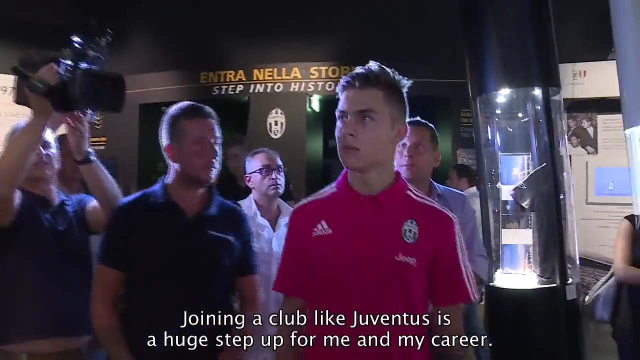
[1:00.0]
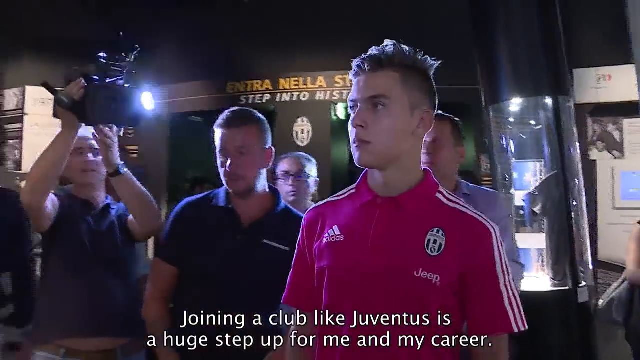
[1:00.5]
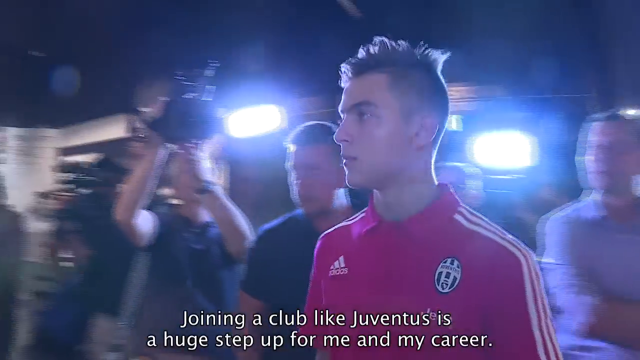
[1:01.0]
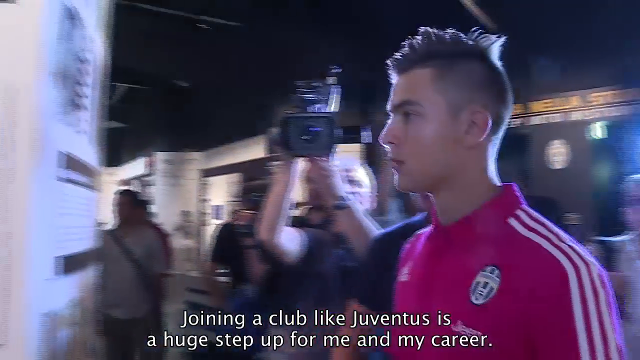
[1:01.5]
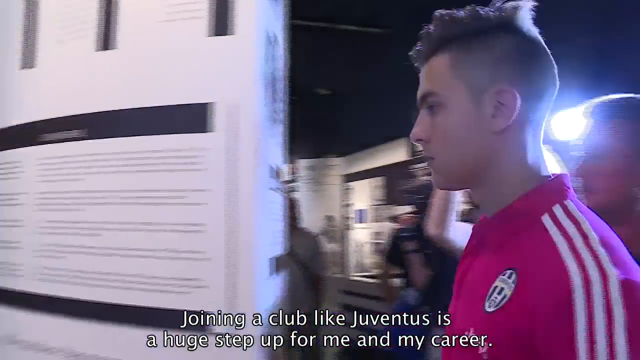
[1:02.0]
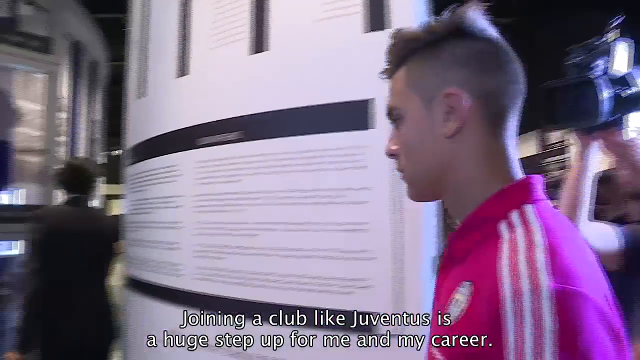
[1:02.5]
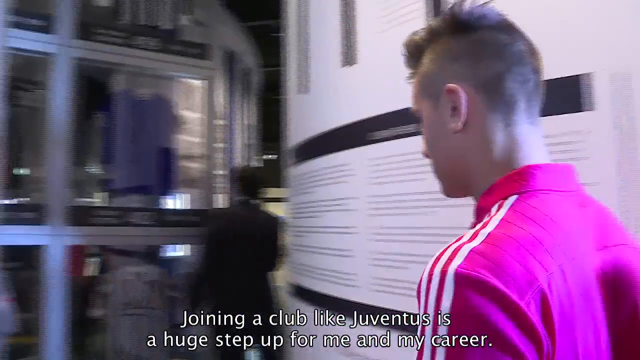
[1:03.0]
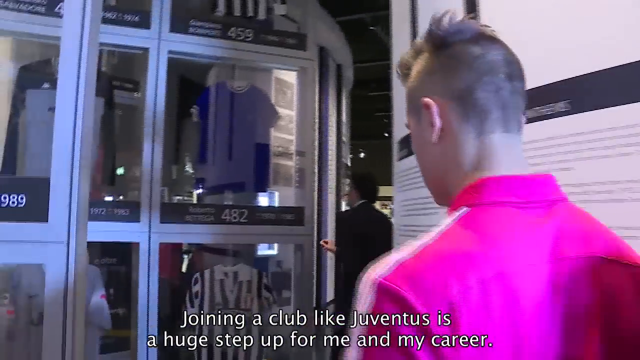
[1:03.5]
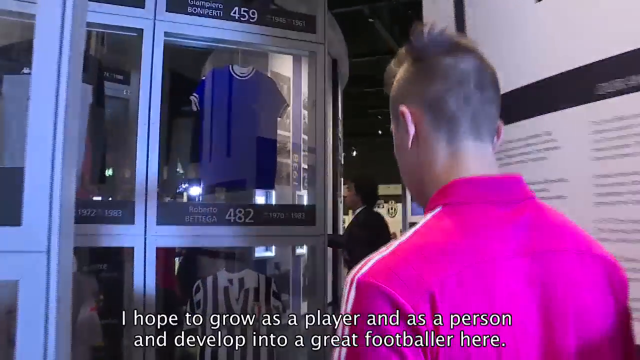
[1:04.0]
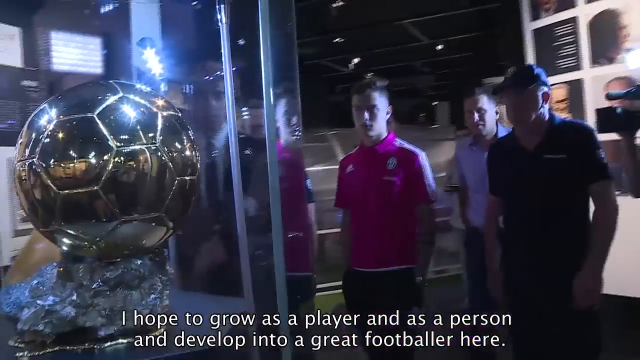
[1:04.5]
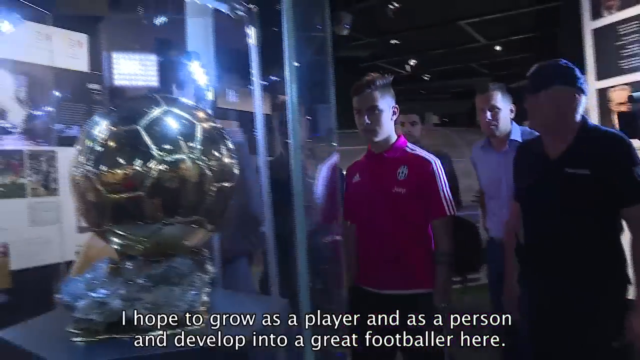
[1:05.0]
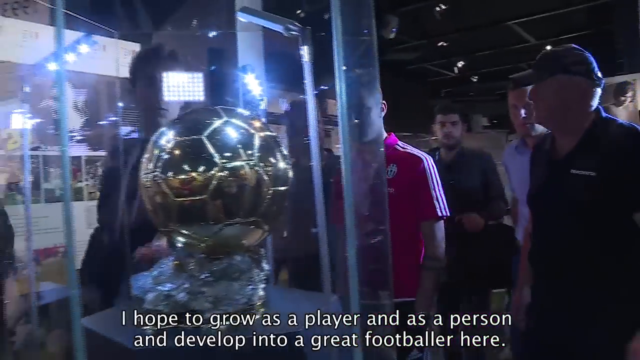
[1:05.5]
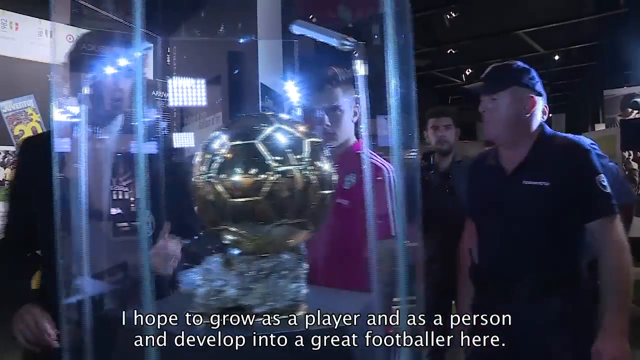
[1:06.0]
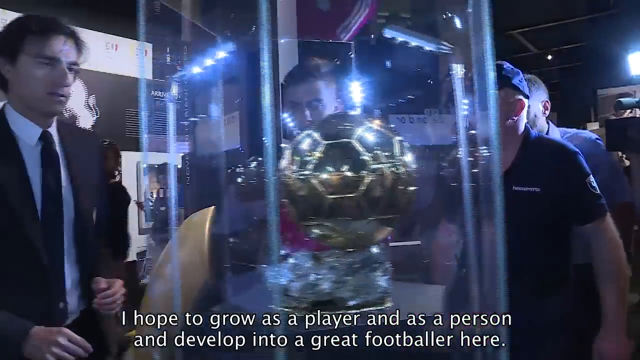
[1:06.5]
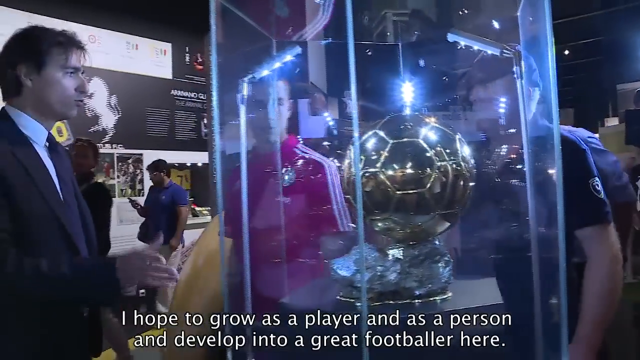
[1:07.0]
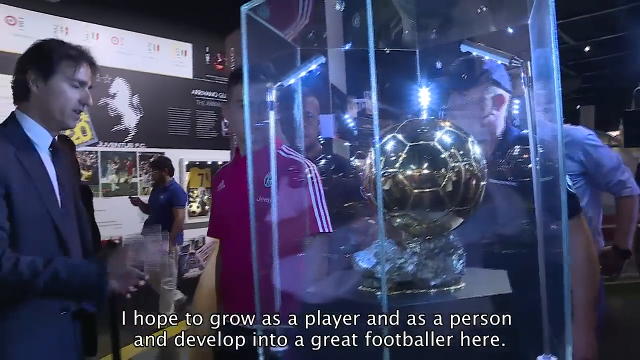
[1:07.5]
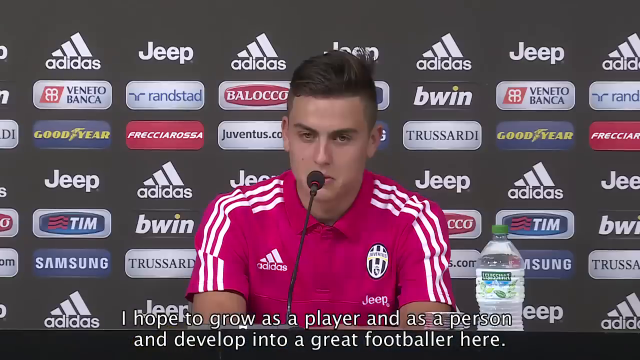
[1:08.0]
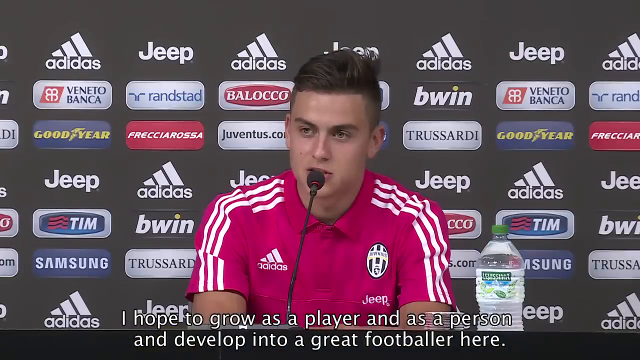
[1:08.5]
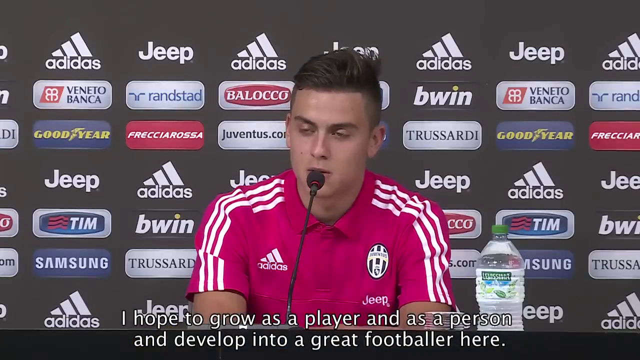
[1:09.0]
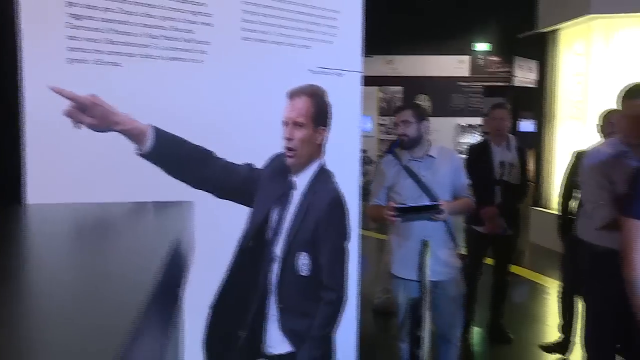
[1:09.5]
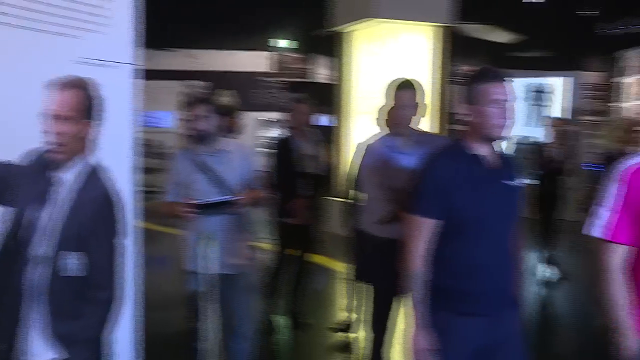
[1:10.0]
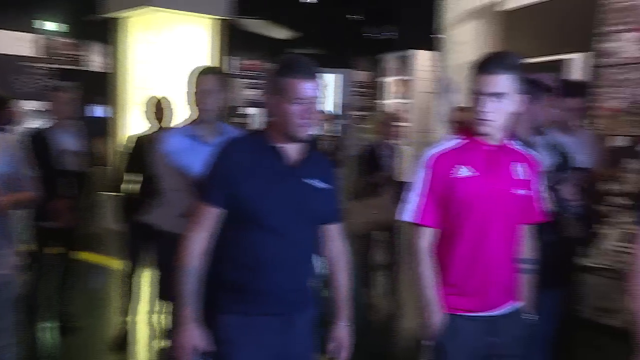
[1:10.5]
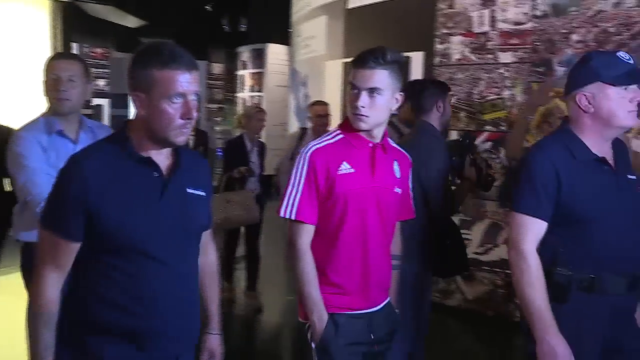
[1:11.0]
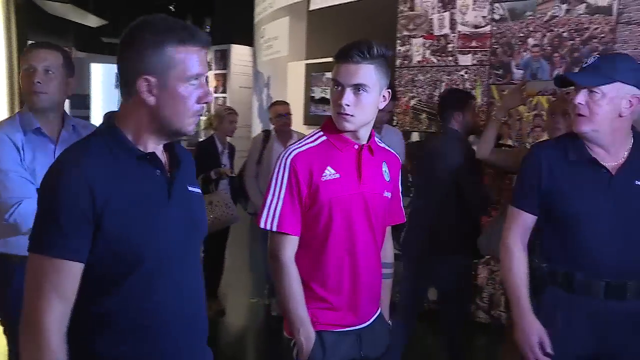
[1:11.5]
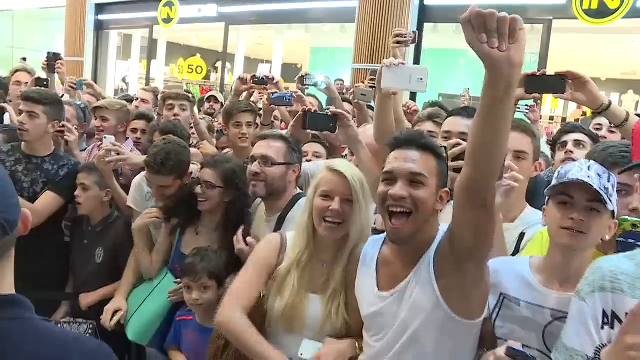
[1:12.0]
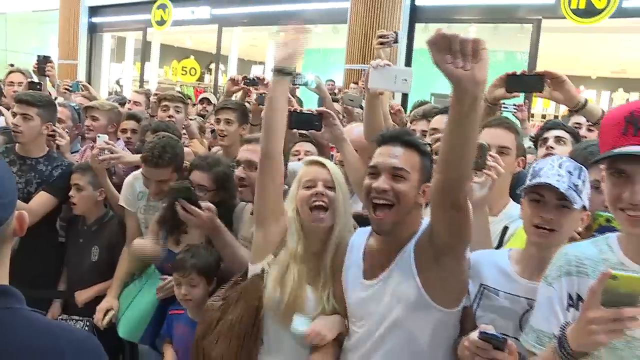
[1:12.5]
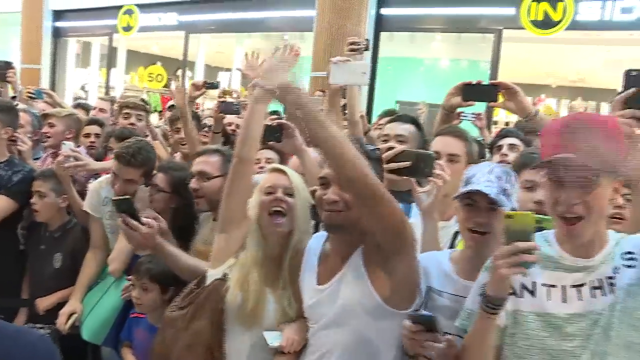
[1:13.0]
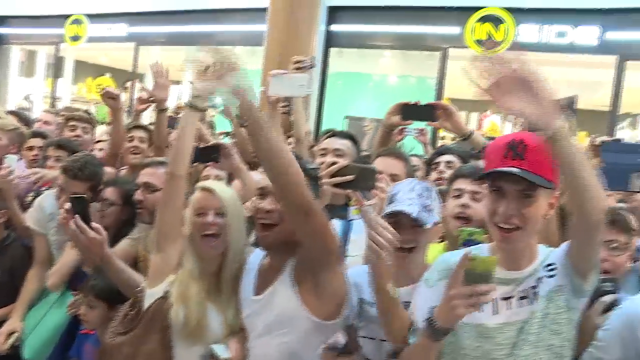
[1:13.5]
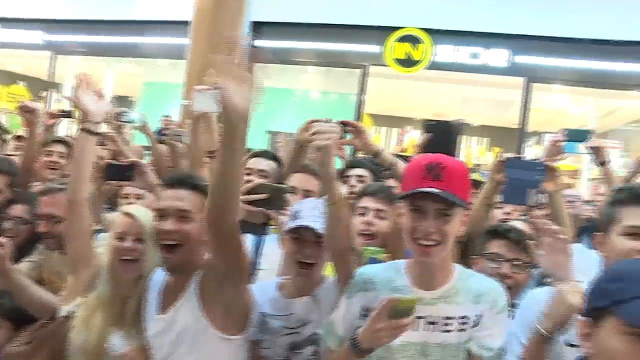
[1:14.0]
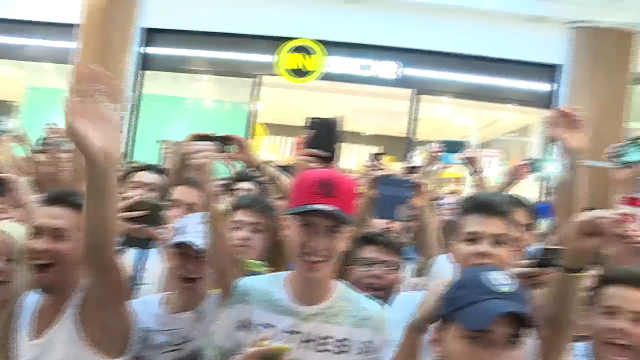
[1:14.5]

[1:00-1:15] The player faces a ton of cameras around him as two other men escort him and make room. He is shown the sports store within the stadium and sees several history artifacts, such as jerseys and trophies, as he walks with the group of men. The video cuts to the interview as he answers more questions, then returns to his tour of Juventus history. He appears very tense, with his hands in his pockets and a serious face. A huge number of supporters of all ages, men, women and children, are shown being guarded by security as he approaches them from afar.